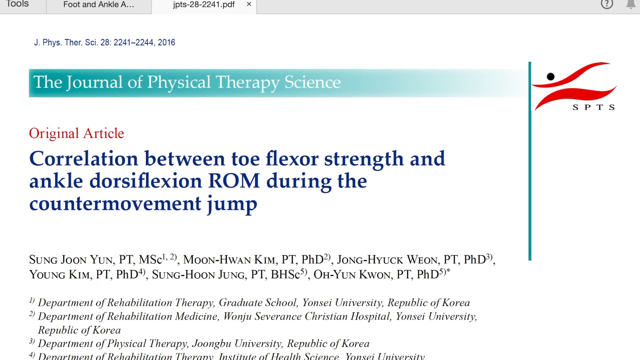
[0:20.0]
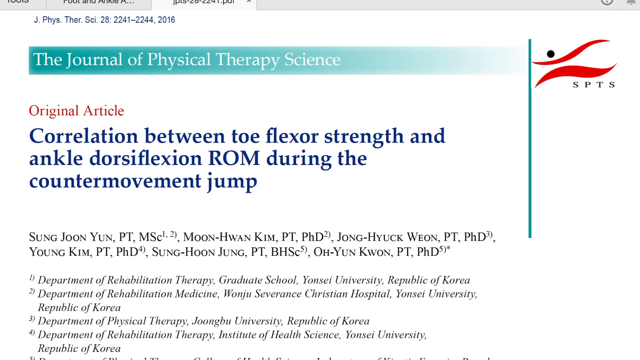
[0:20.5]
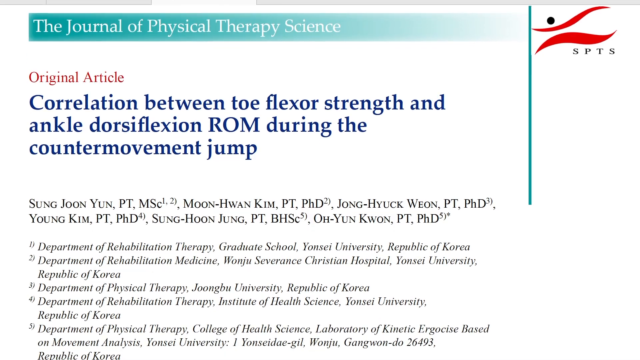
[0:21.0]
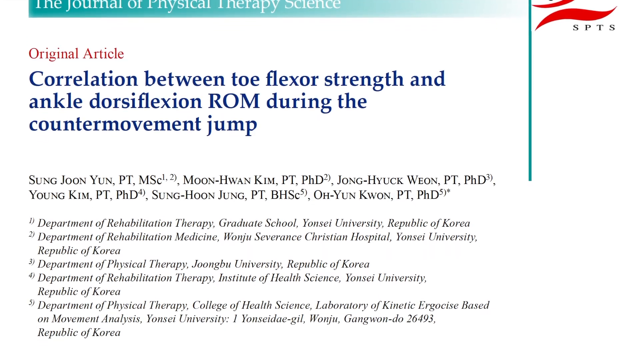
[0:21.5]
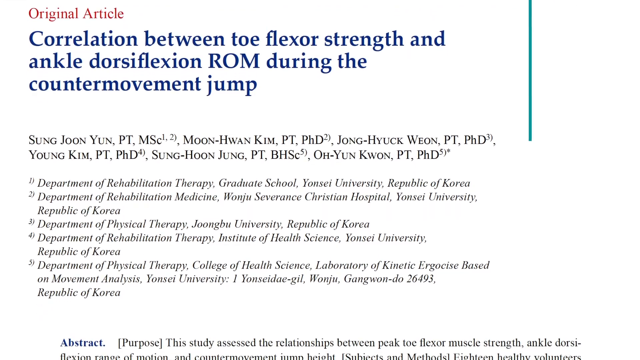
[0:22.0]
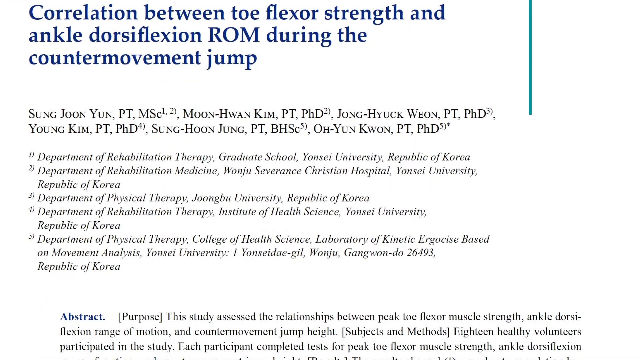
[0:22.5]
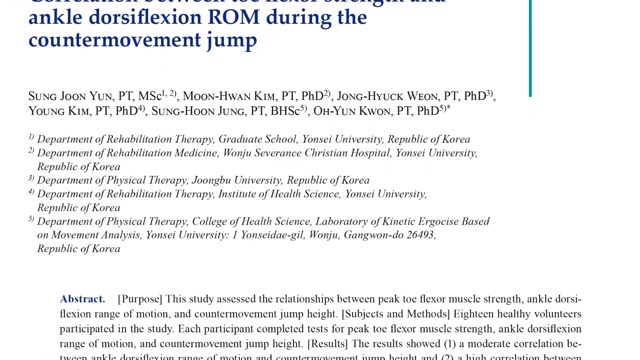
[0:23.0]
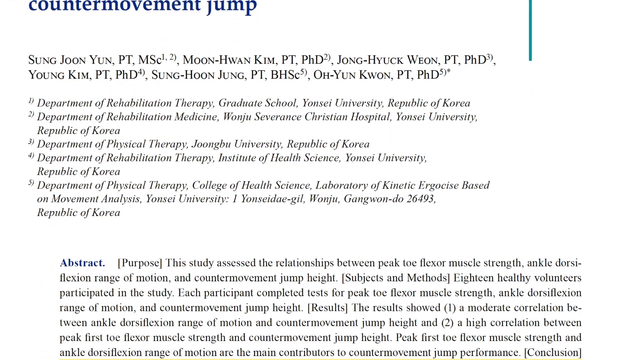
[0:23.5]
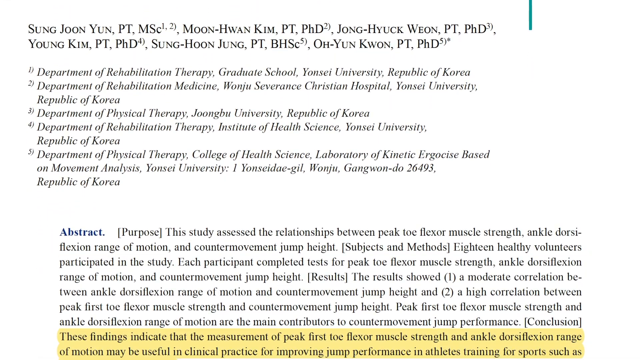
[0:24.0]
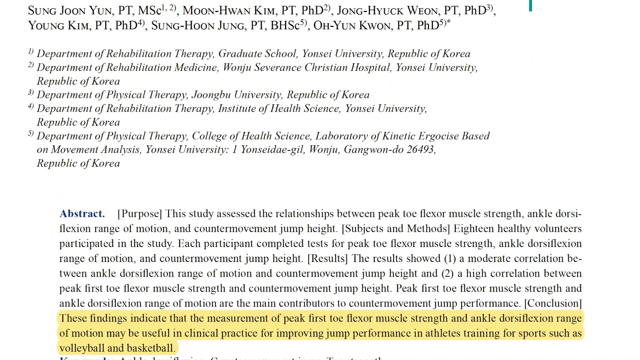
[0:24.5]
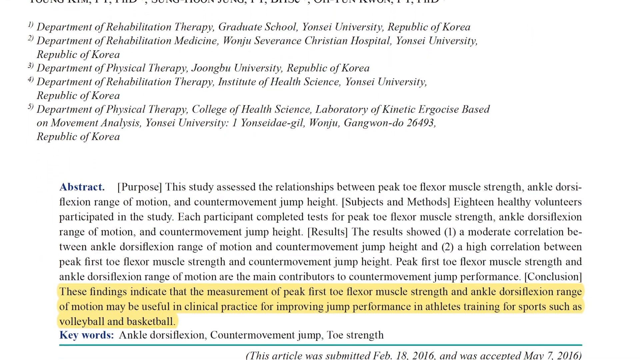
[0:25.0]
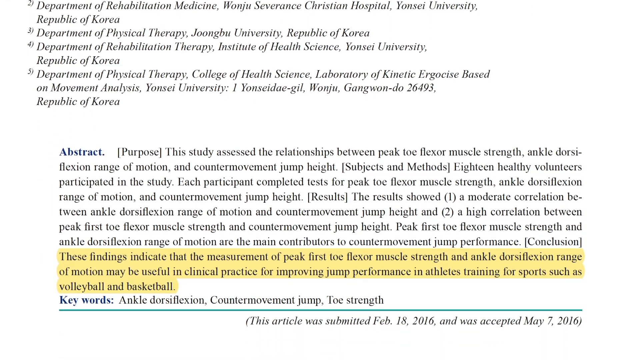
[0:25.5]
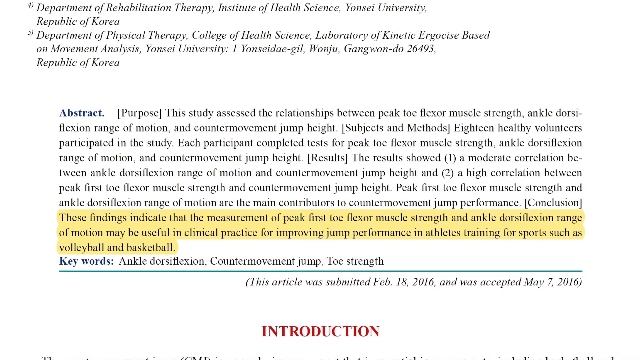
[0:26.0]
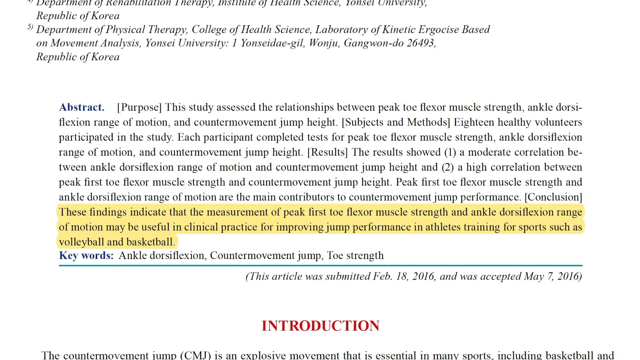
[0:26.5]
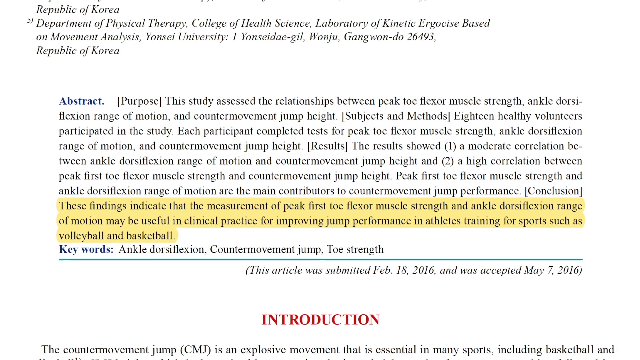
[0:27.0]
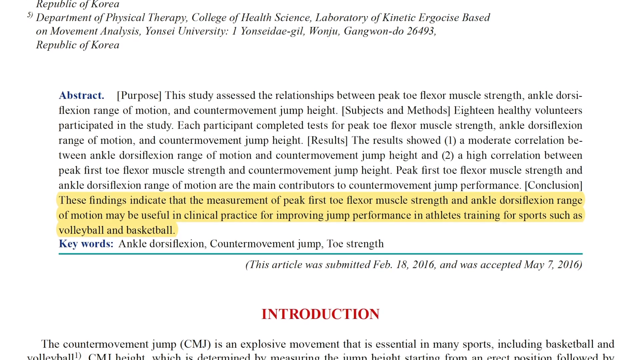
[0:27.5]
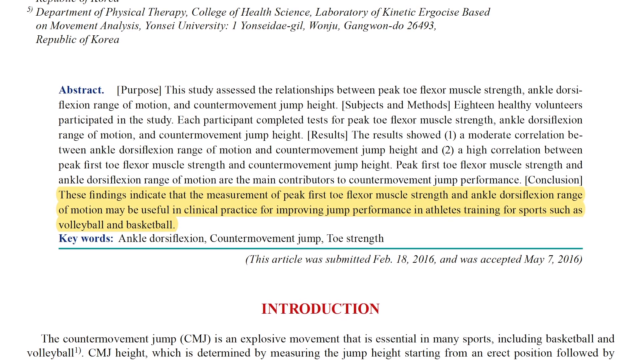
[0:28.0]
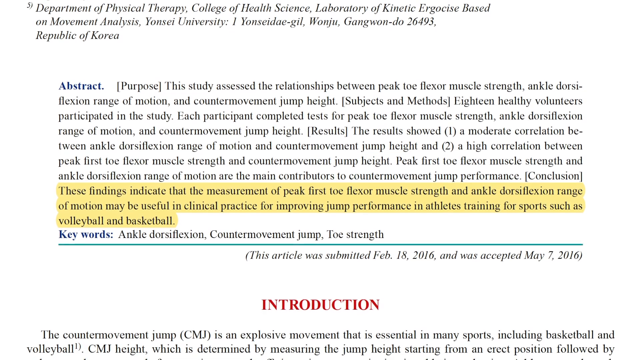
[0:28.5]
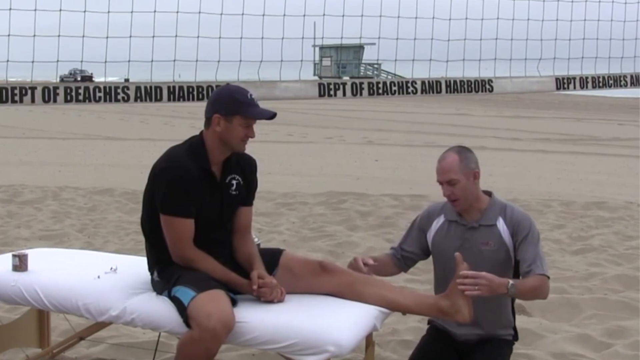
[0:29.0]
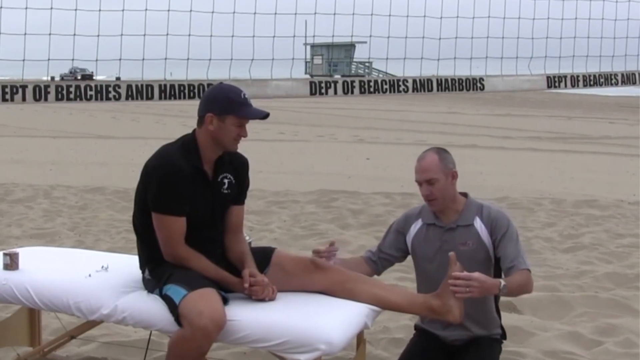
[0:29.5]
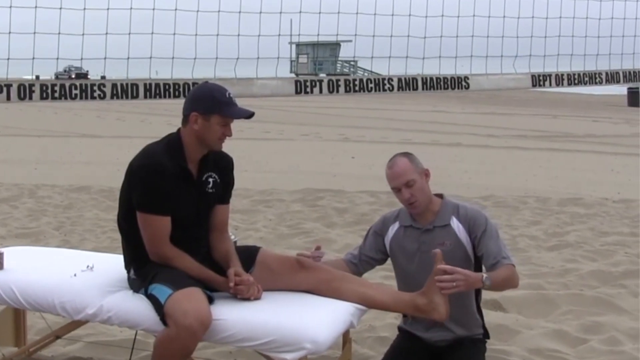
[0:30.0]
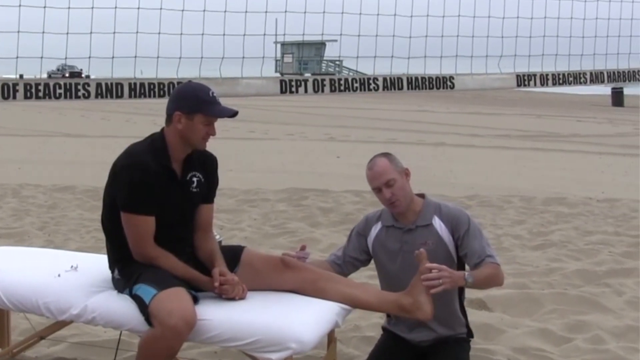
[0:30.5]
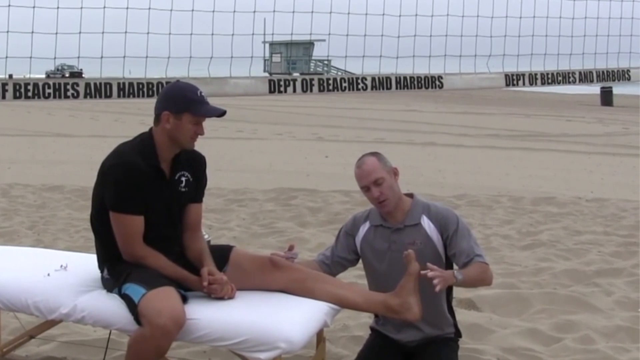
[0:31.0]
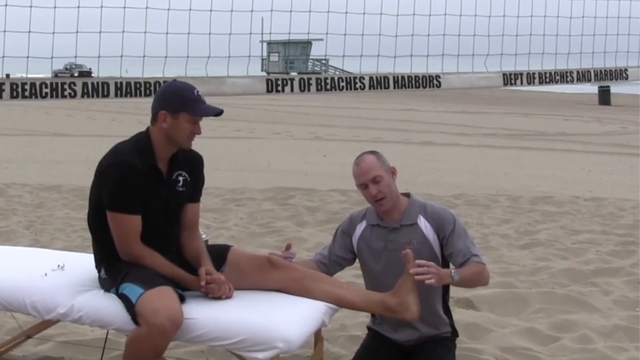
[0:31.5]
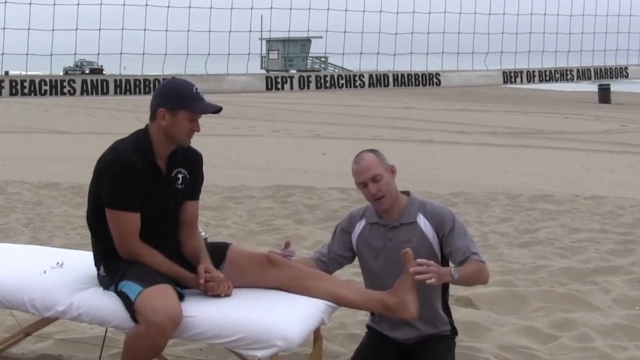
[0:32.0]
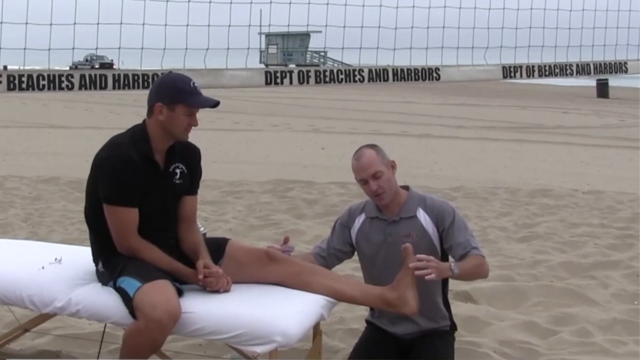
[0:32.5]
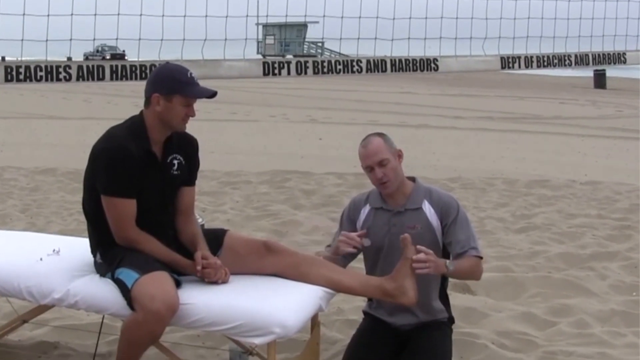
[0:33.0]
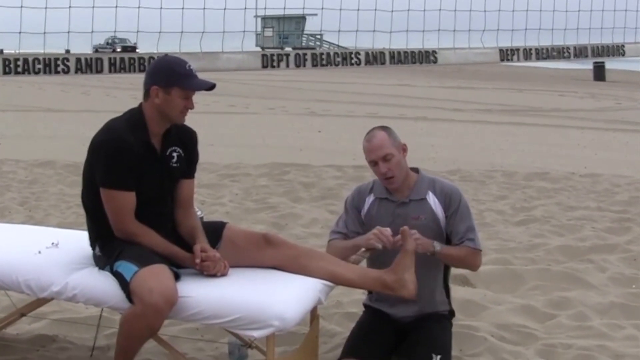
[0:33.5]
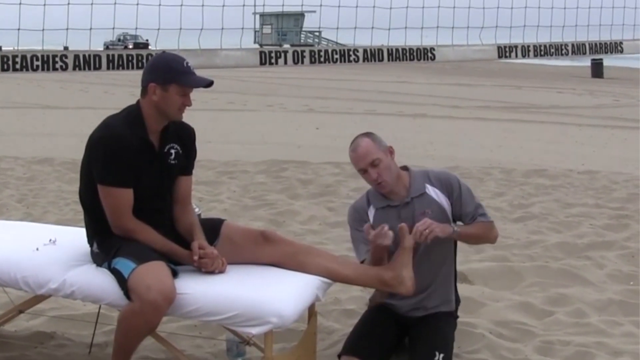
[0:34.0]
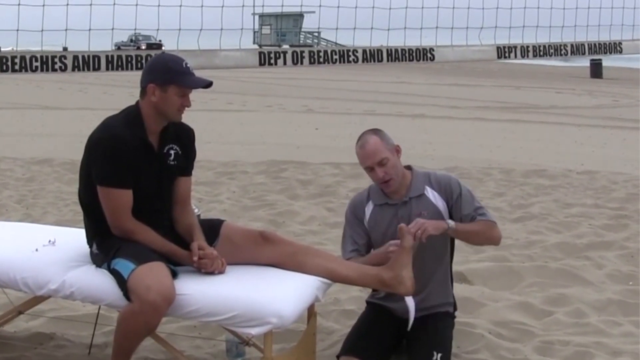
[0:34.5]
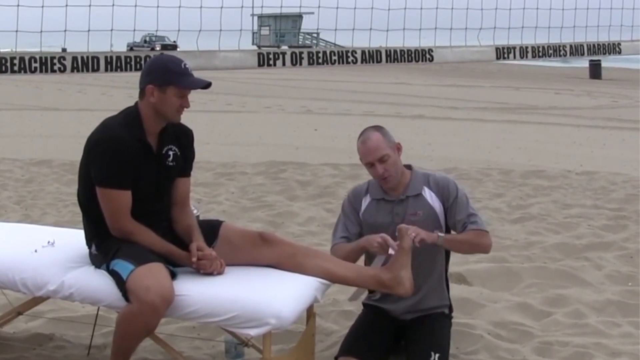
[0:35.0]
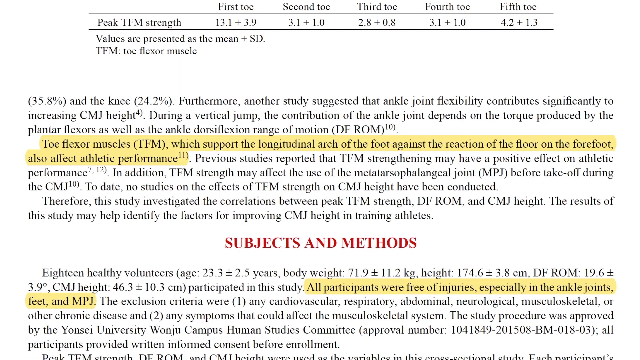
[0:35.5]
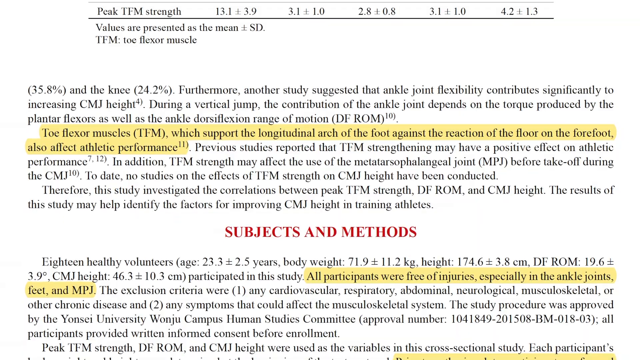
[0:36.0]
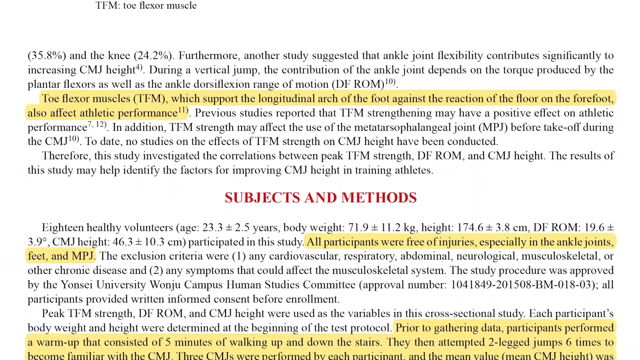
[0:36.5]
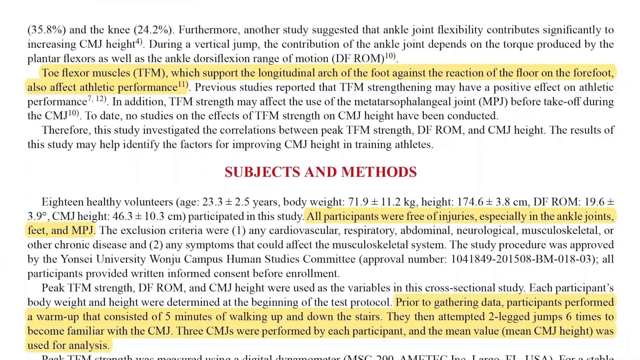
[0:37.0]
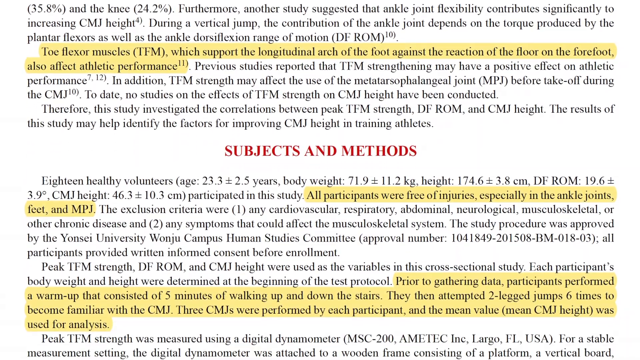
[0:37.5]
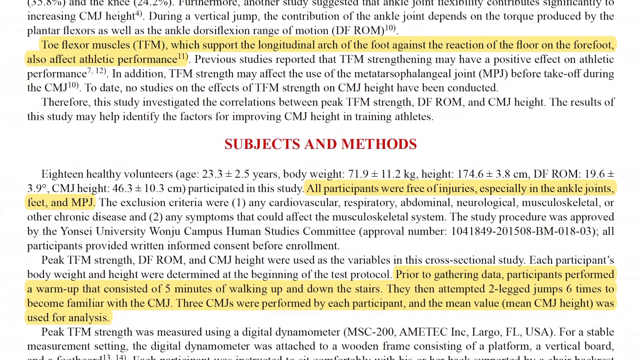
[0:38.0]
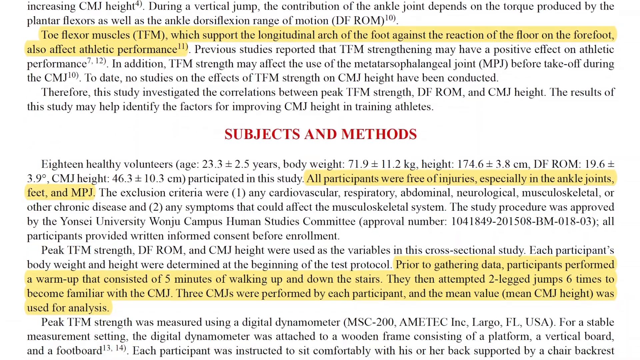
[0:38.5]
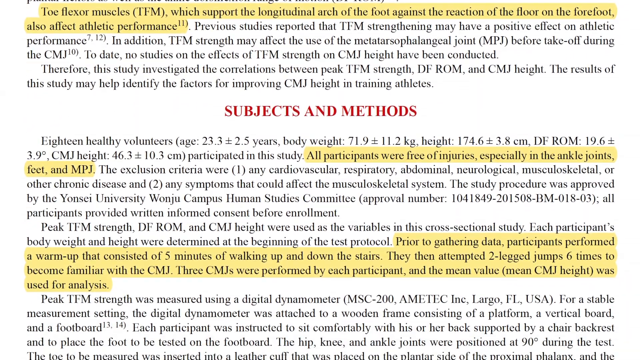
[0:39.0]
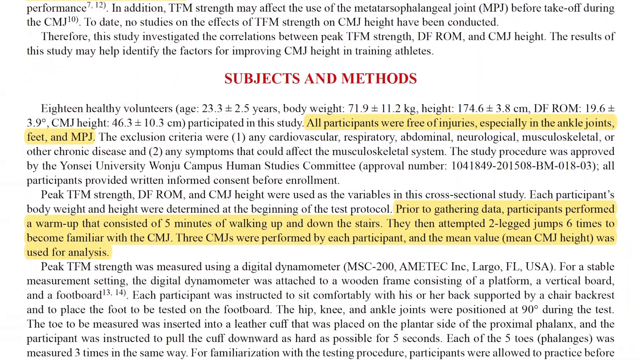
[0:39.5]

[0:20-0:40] A web page has a light green stripe across the top with white text reading "the Journal of Physical Therapy Science". Underneath, in red, it says "original article", and beneath that, in dark blue, "correlation between toe flexor strength and ankle dorsiflexion ROM during the counter movement jump". The page slowly scrolls down. The video then cuts to a beach with sand as far as the eye can see. A man in a short-sleeved black shirt, a black hat and black shorts with a blue stripe down the sides is sitting on a bench with one leg up on it. Another man, in a short-sleeved brown shirt with a collar, is knelt down in front of the bench, massaging the seated man's foot. Behind them is part of a volleyball net, and along the bottom of the net it says "Department of Beaches and Harbors".